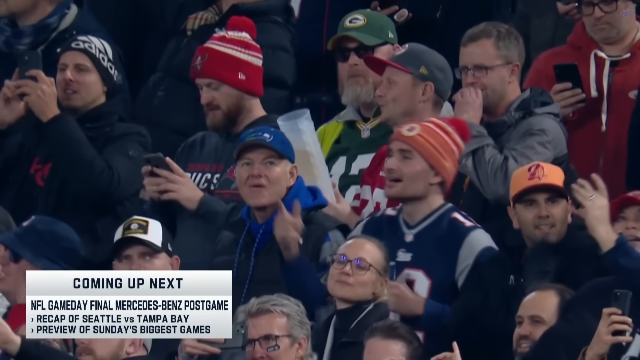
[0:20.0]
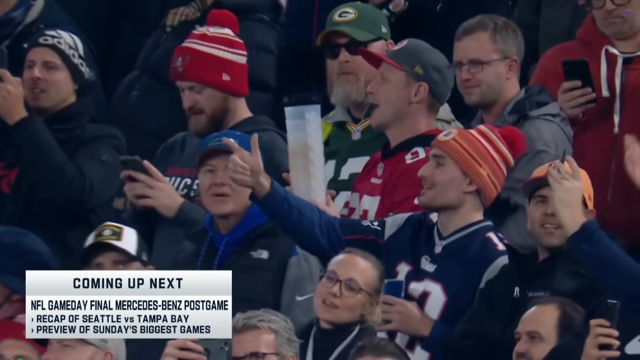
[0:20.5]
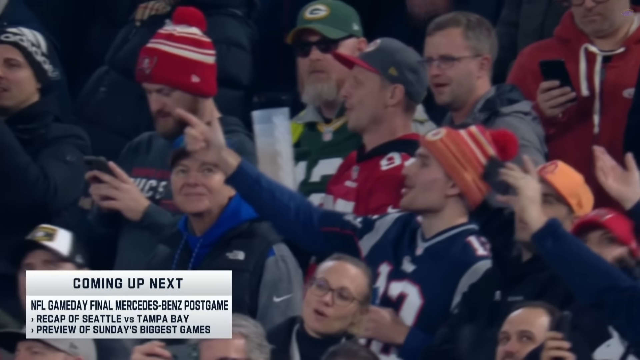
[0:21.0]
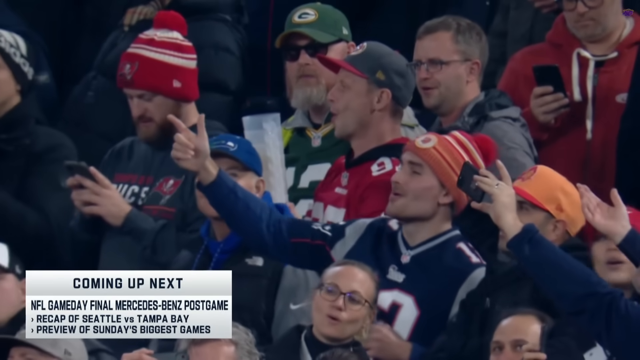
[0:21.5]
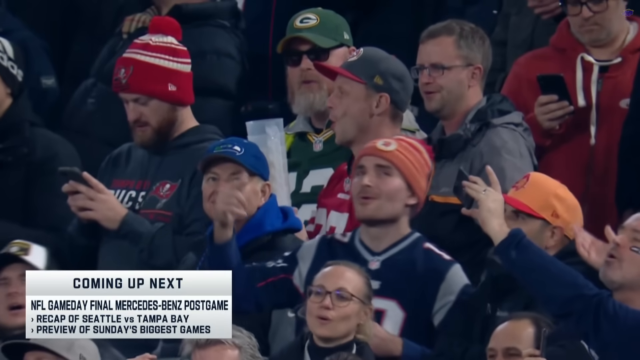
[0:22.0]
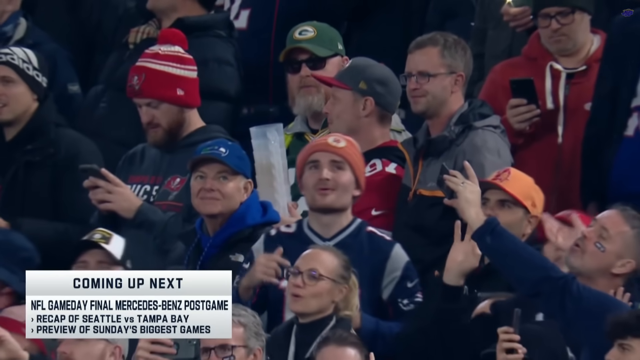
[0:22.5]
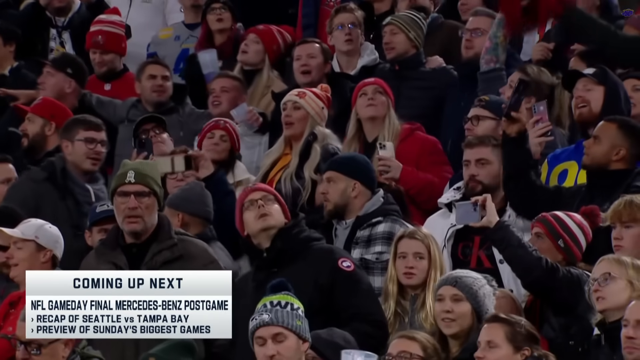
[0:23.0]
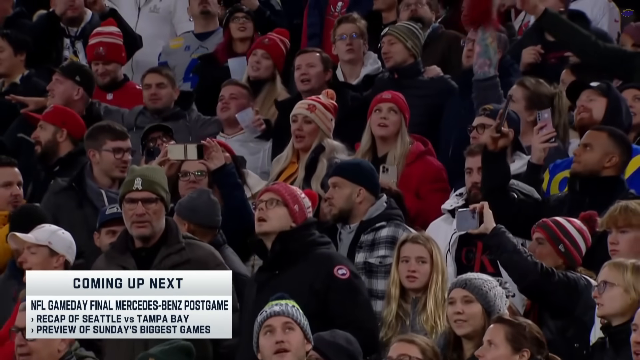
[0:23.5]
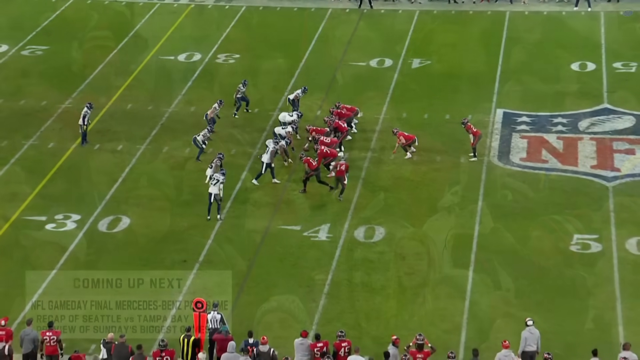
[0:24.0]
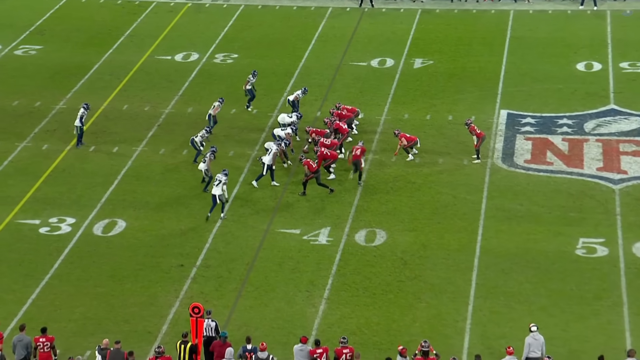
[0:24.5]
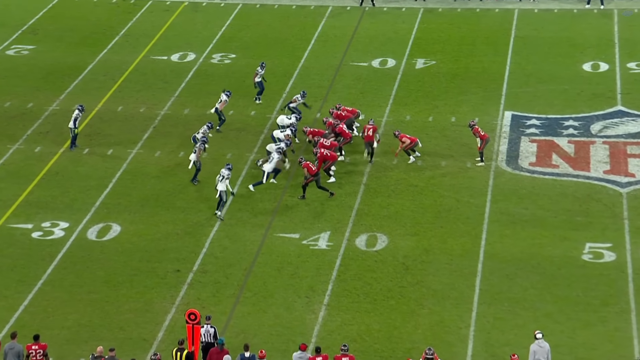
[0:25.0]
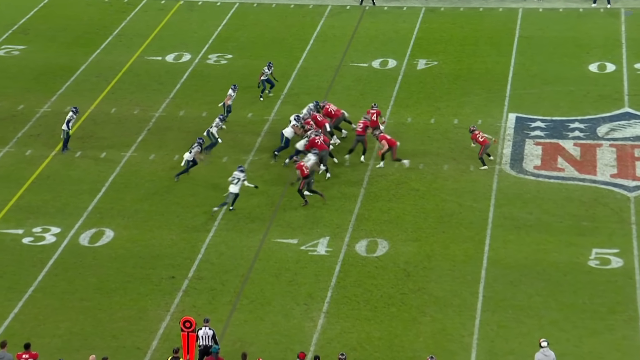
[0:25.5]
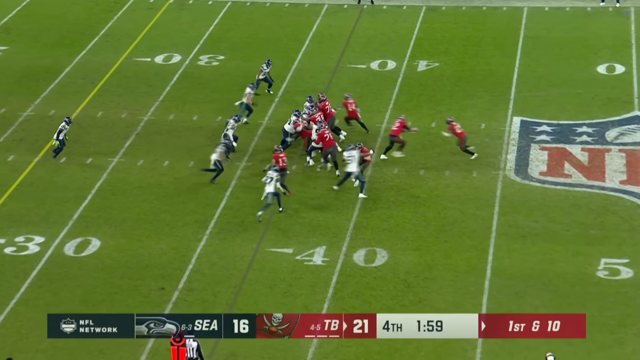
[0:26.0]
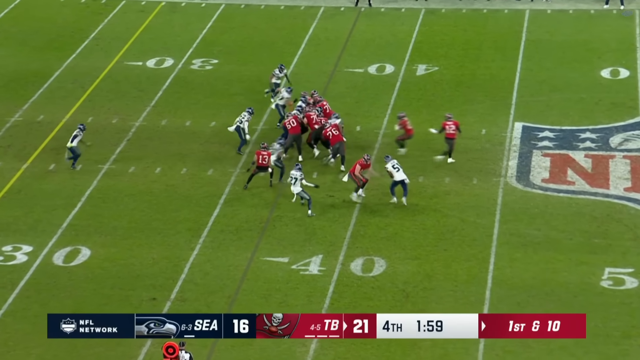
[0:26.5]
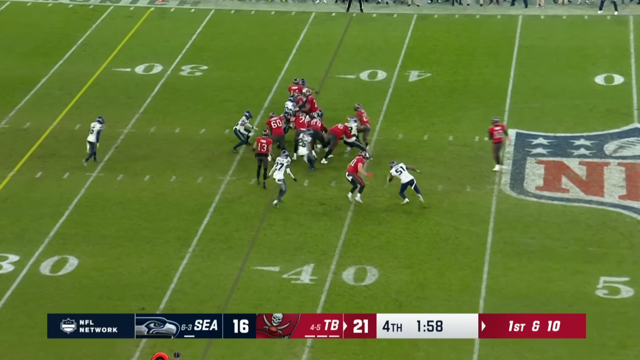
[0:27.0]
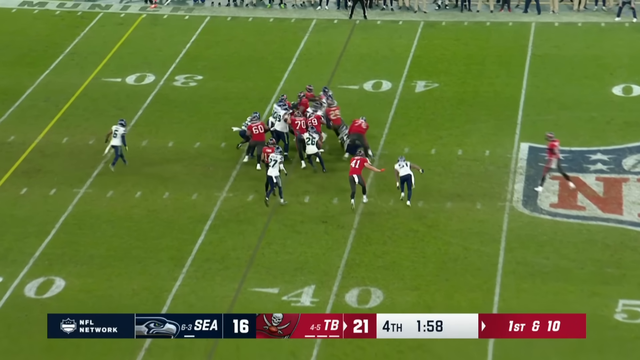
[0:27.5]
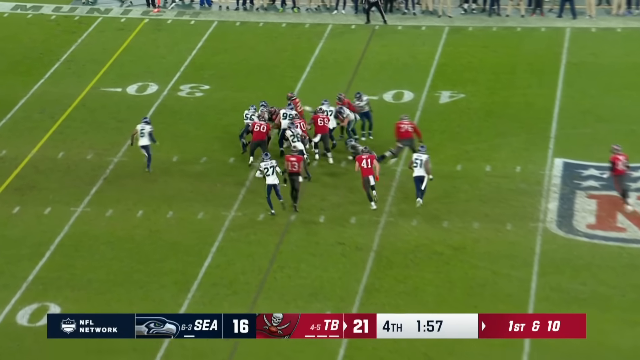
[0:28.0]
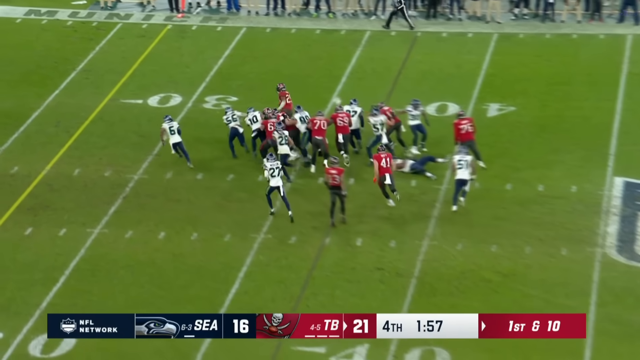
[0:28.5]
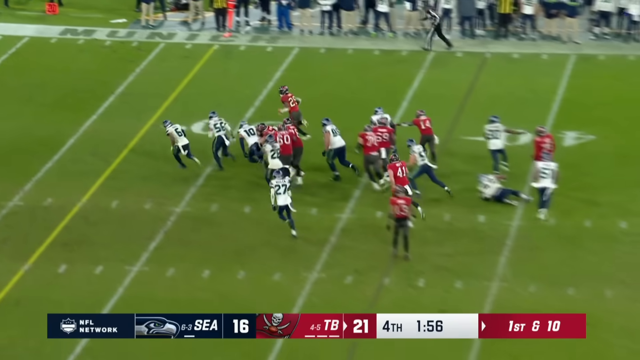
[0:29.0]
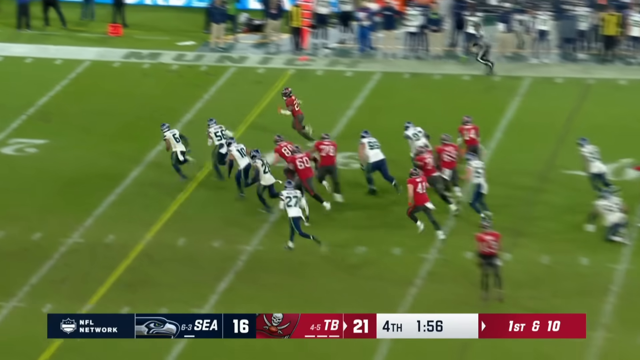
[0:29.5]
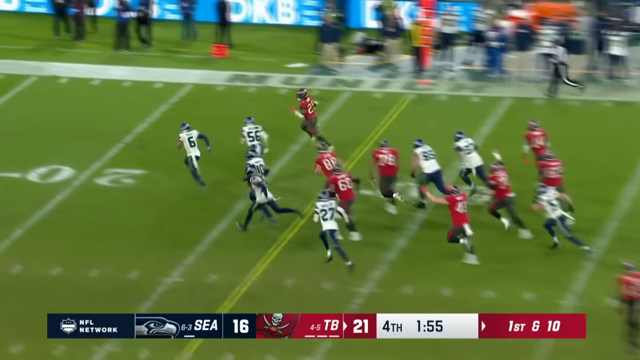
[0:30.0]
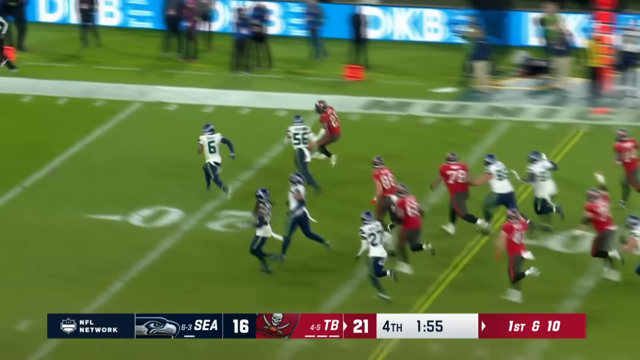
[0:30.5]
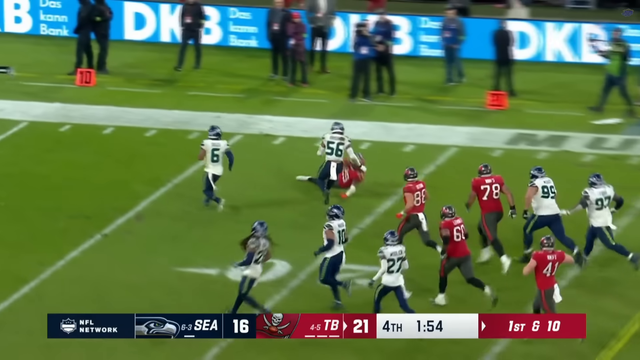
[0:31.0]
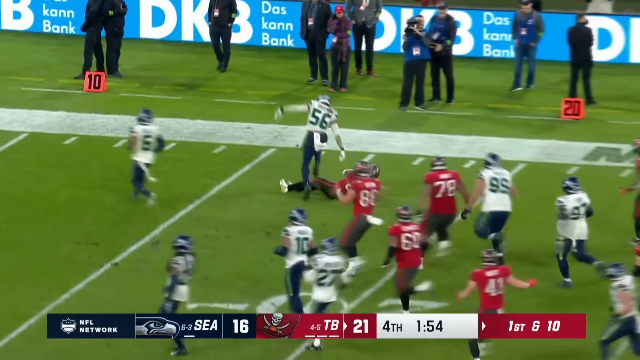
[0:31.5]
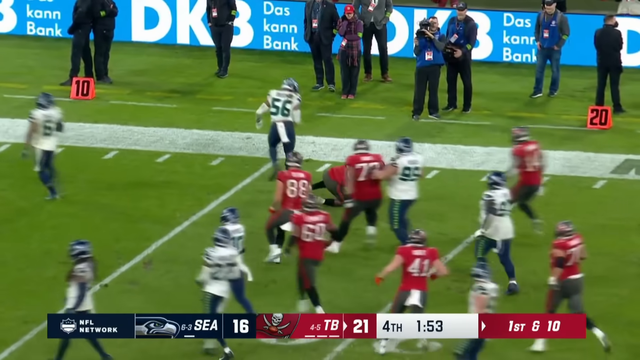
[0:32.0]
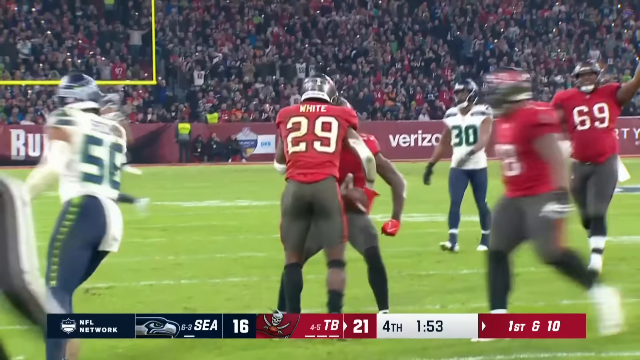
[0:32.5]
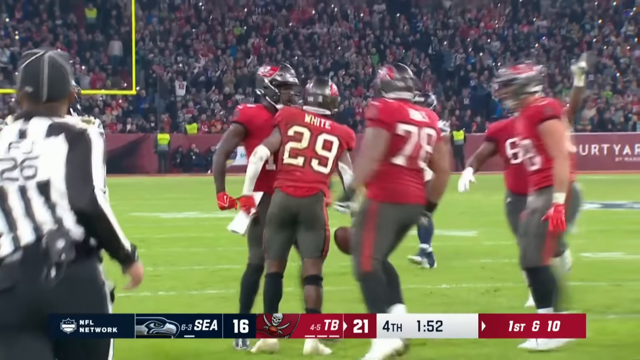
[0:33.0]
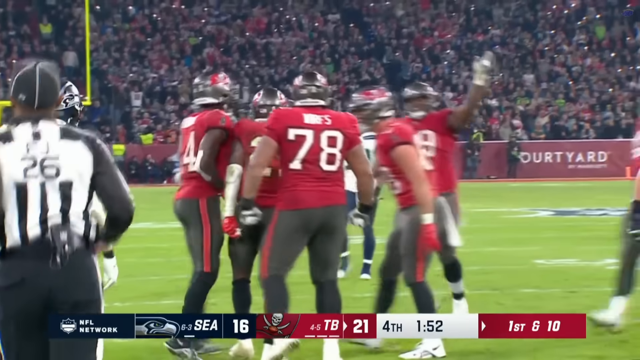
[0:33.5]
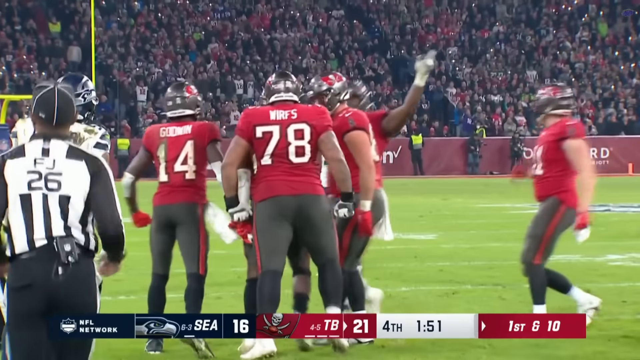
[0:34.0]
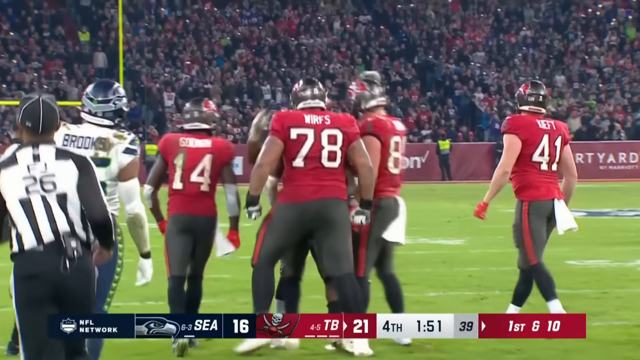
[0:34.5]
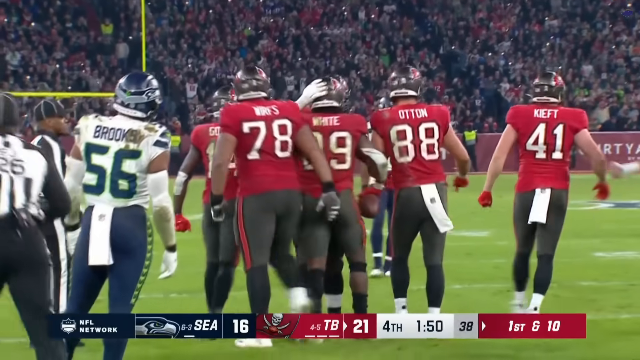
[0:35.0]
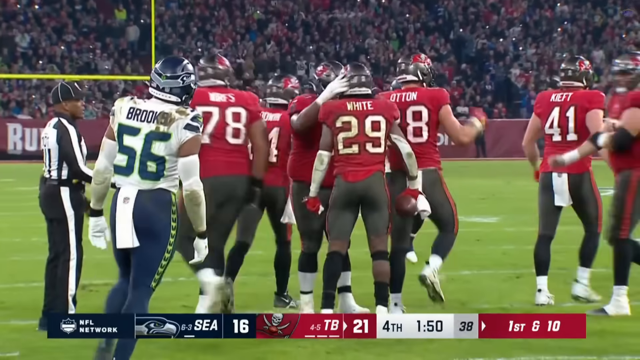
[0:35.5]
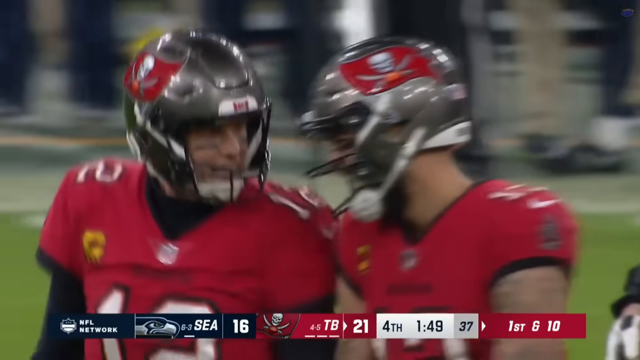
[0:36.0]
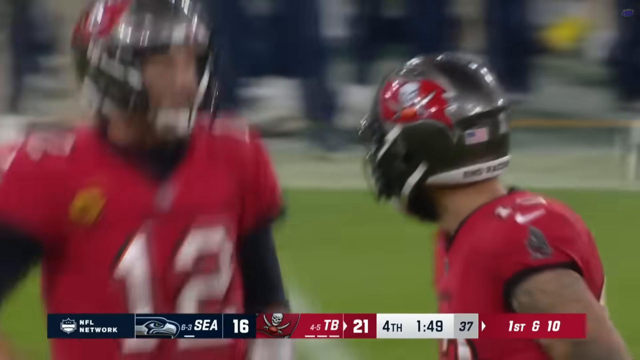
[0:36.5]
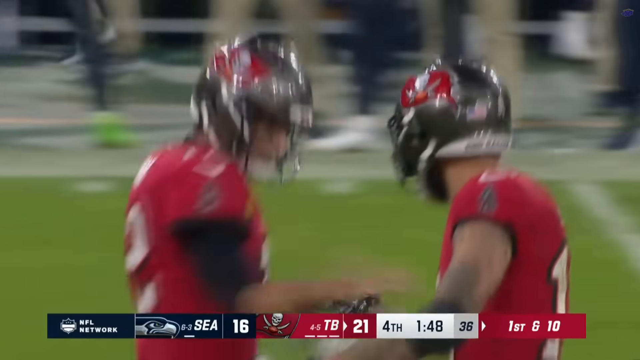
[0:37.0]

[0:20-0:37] A close-up shows a woman in a long-sleeved black jacket singing with her hands up in the air. Other people in the crowd, wearing black and red Tampa Bay colors, sing with their arms around each other, waving their hands back and forth. The view then goes to the football field, where the Tampa Bay Buccaneers are lined up in front of the Seattle Seahawks. Tampa Bay has the ball and runs past the Seahawks: the quarterback, Tom Brady, hands the ball off to a running back, number 29, who runs past the number 30 to the 20-yard line. Then the players get up and are excited.